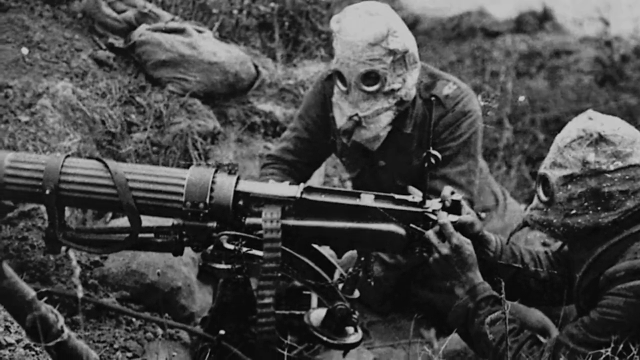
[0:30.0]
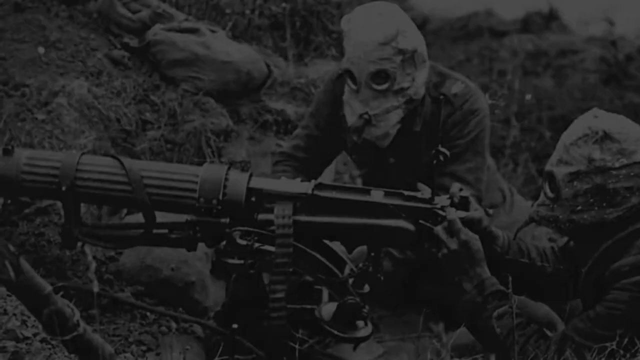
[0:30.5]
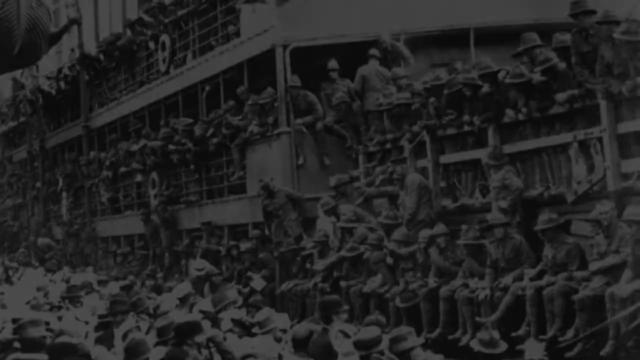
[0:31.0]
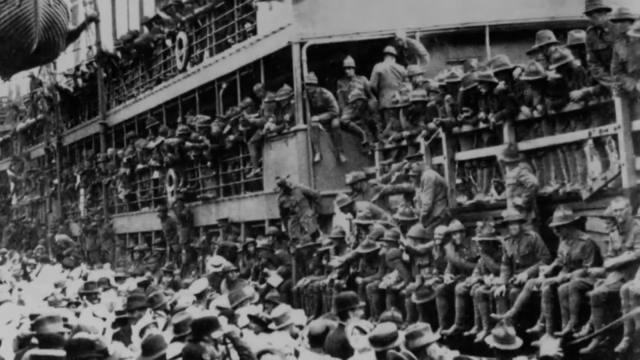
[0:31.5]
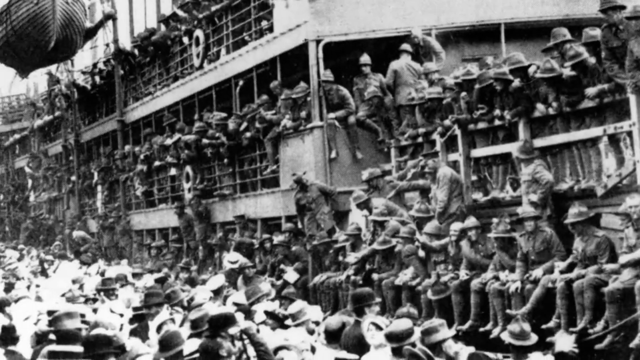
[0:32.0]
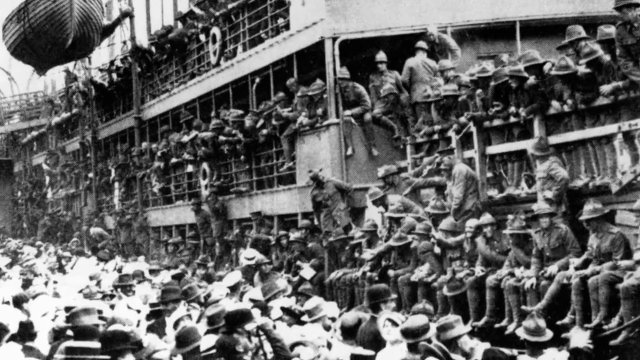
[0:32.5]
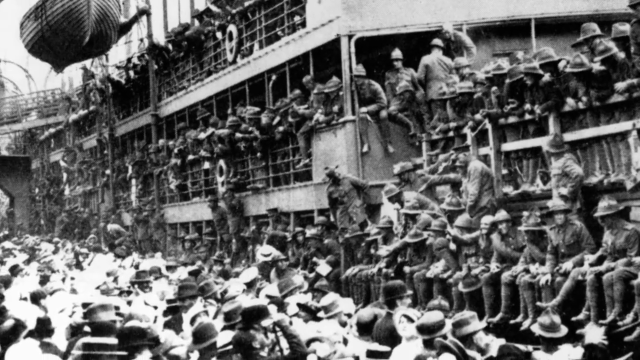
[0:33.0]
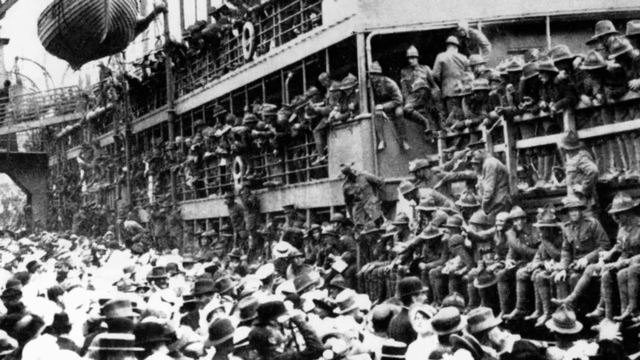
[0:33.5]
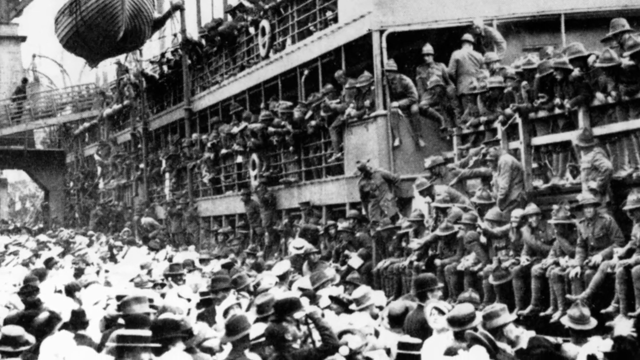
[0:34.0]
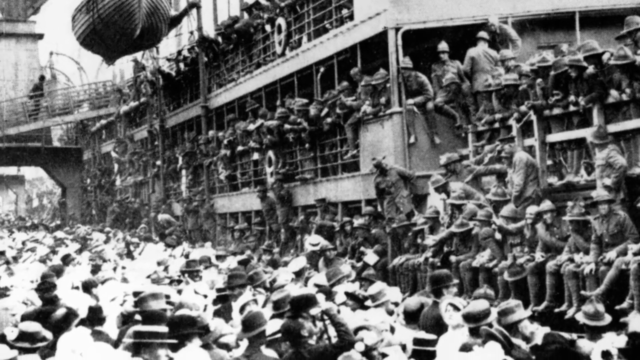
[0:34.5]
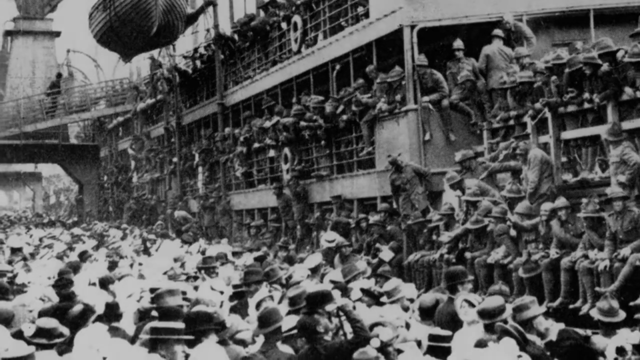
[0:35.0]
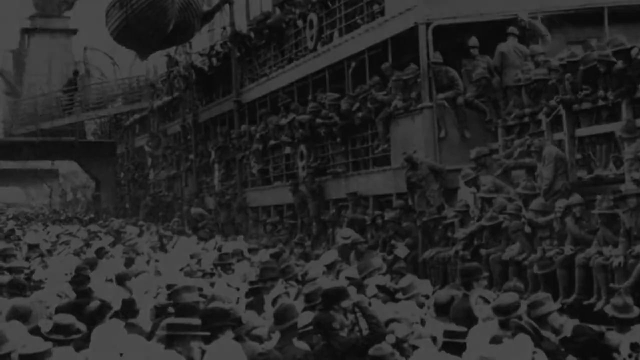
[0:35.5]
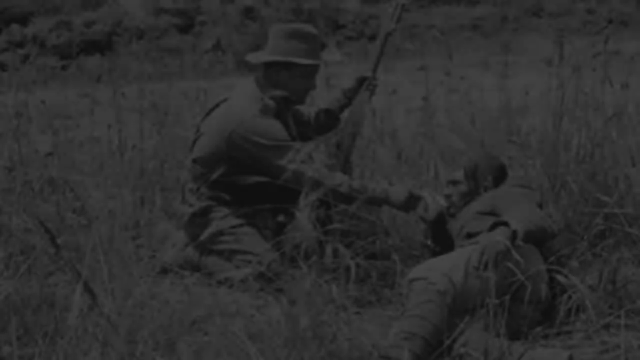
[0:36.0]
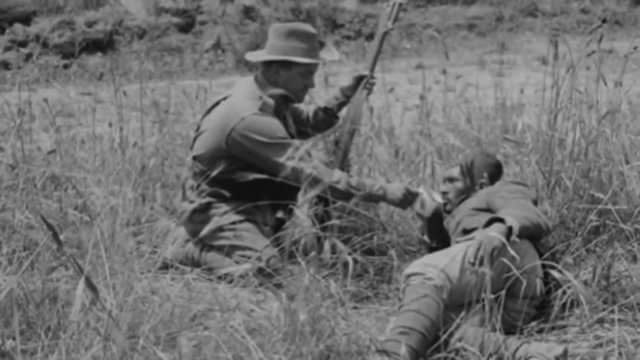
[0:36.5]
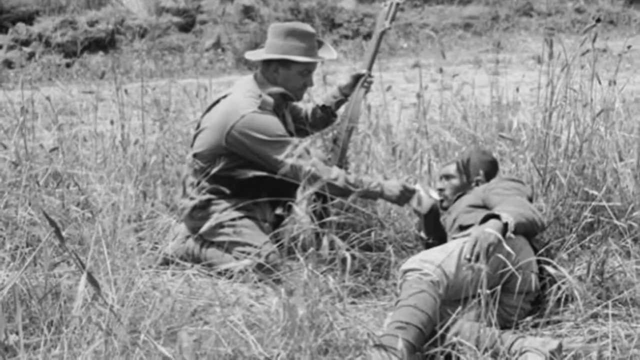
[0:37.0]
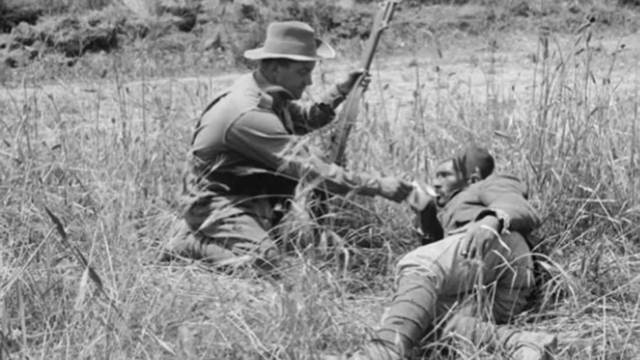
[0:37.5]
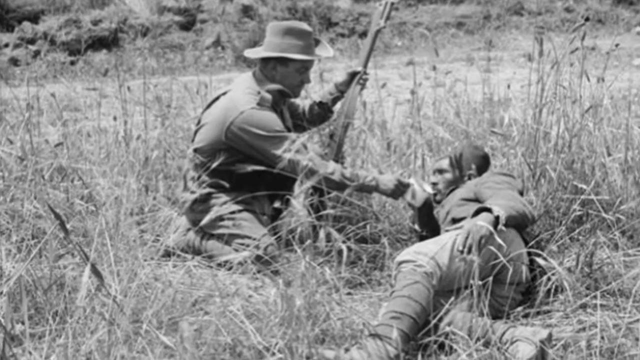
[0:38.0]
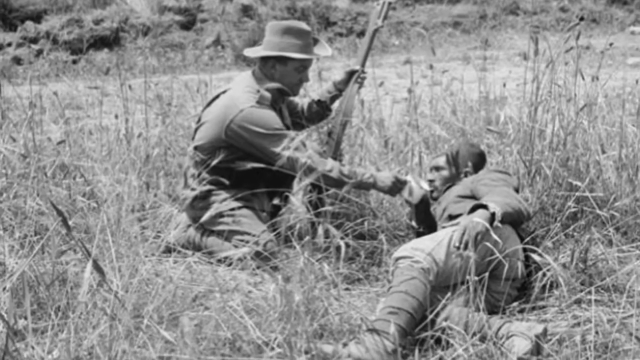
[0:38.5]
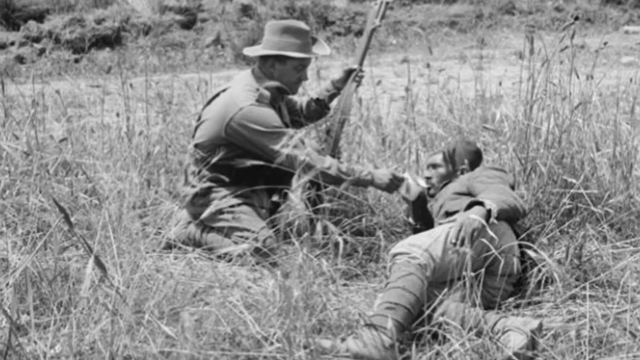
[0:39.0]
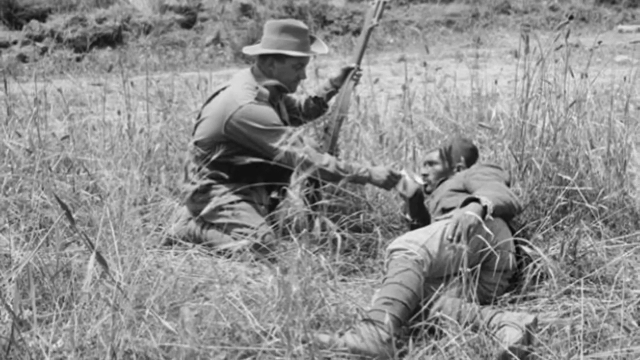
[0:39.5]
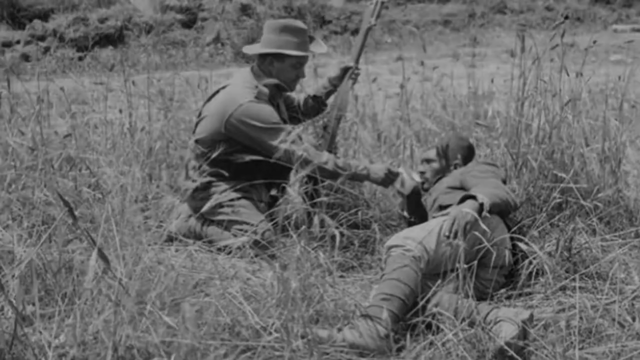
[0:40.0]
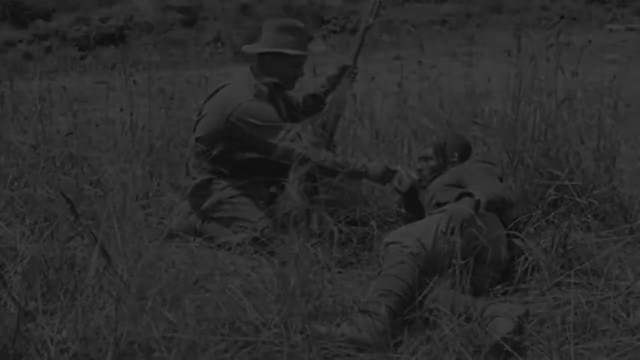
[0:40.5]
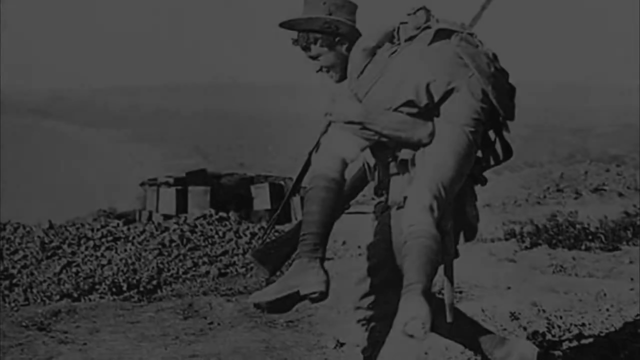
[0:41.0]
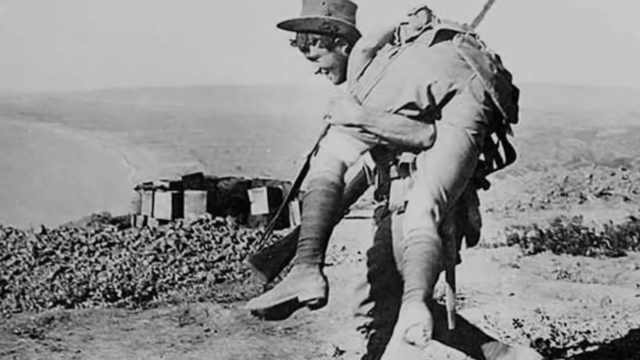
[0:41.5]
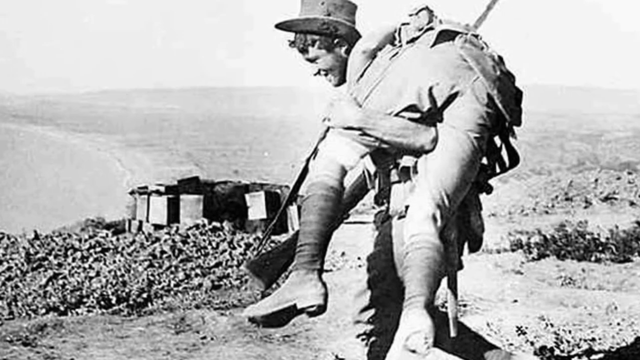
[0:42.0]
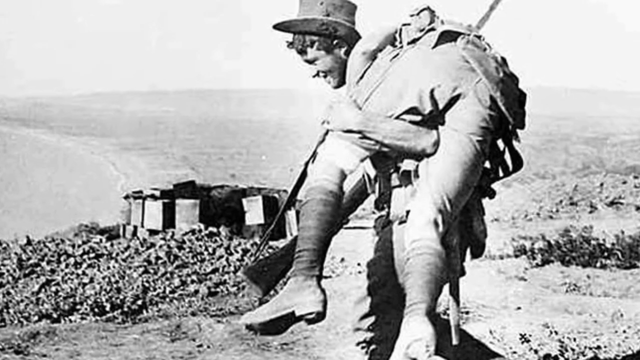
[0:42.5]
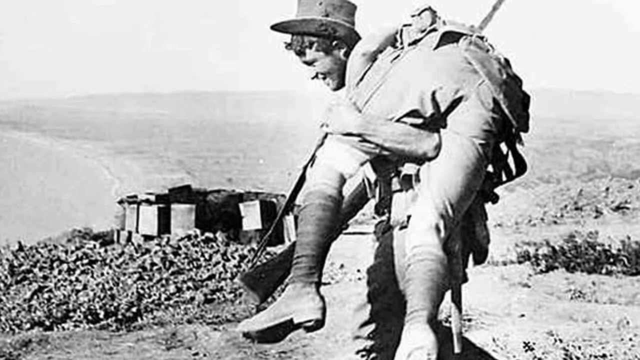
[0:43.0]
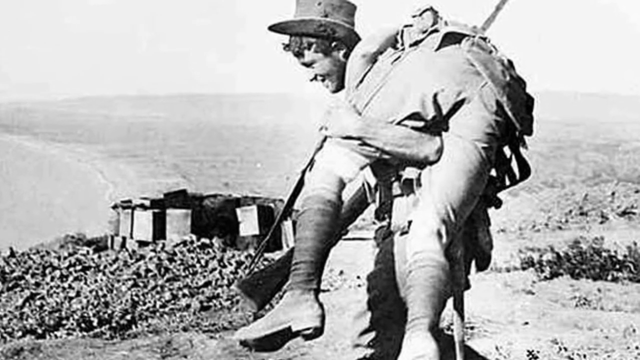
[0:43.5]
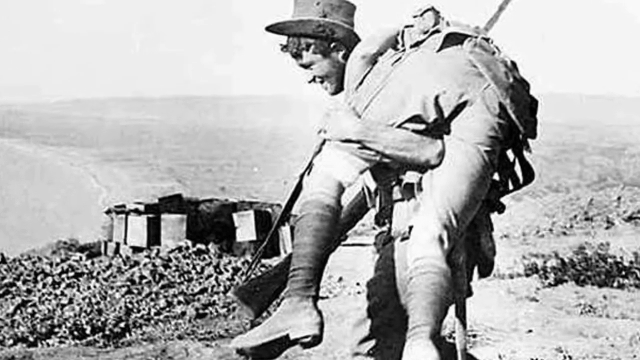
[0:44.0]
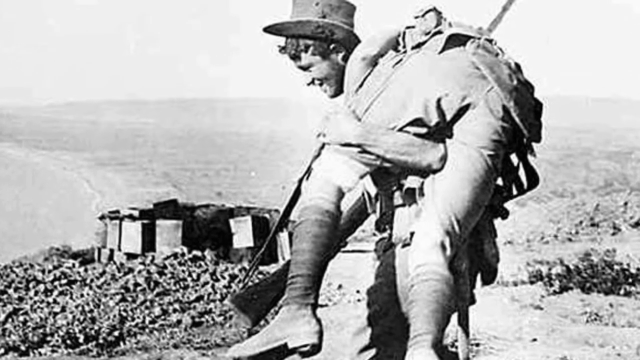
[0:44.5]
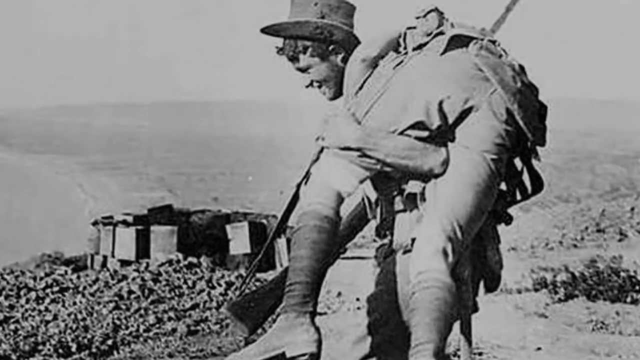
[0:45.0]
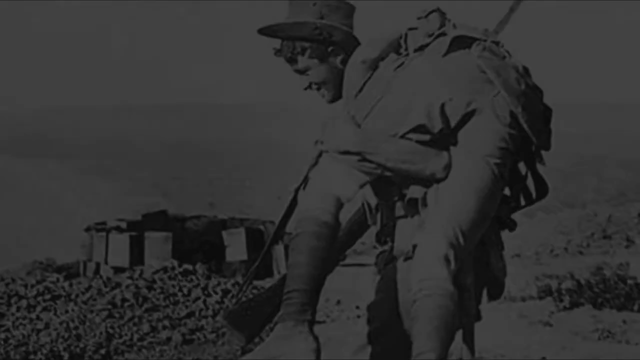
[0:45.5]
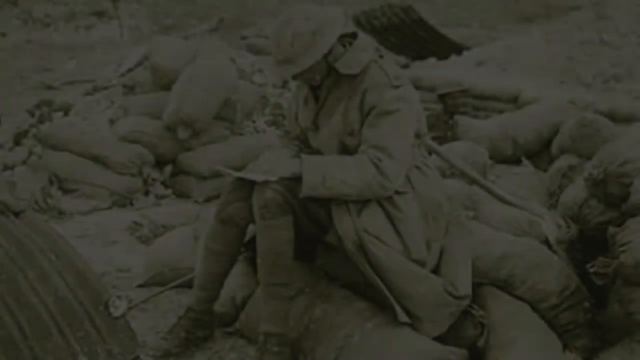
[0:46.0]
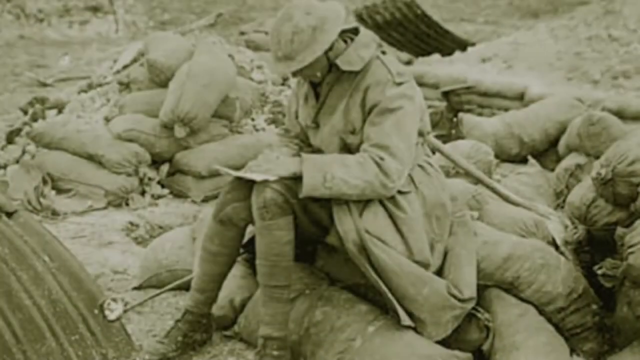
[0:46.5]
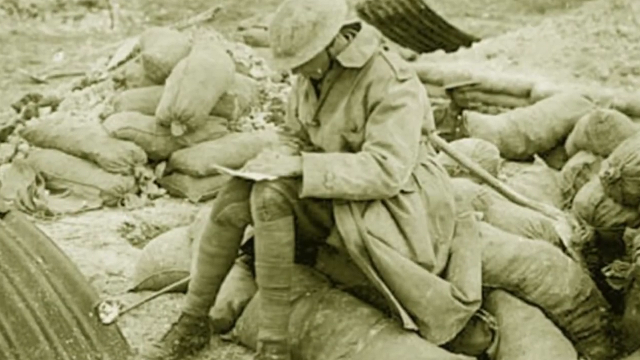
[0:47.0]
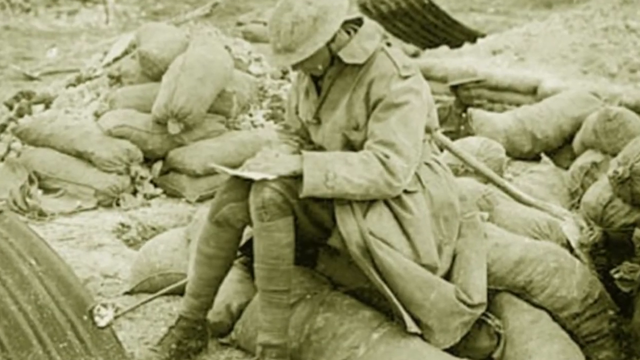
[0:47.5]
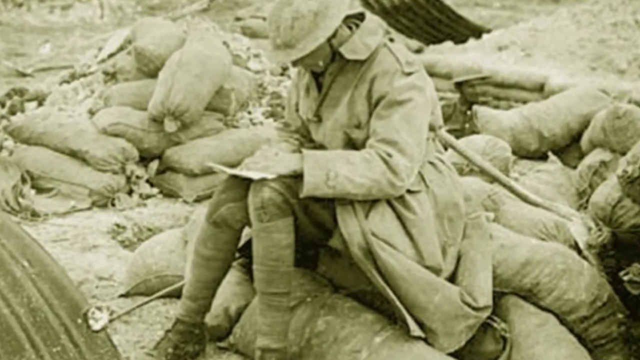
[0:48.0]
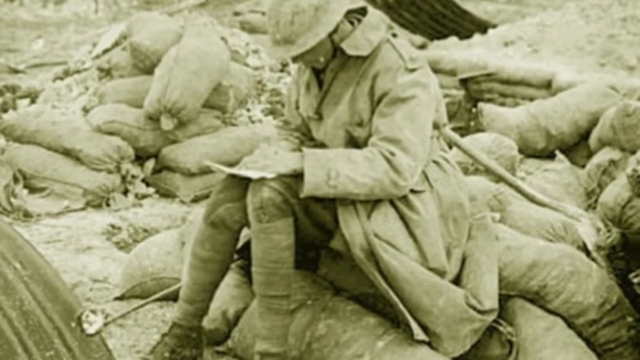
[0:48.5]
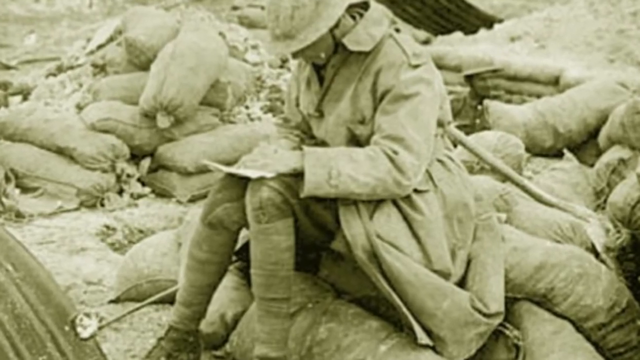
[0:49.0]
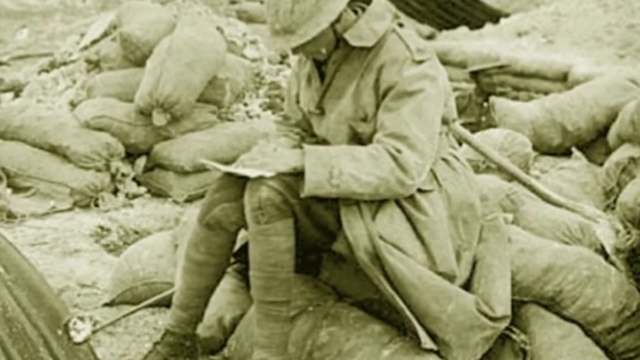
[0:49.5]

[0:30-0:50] Imagery shows two men during World War Two wearing gas masks. The masks are crude and look homemade, with circular eye openings, and look more like bags over their heads. The men are operating a turret-style gun. The view pans to black and white imagery of sailors on a multi-tiered ship with at least three floors. People next to the ship are well-wishers, either seeing the ship off or seeing it come into harbor. A catwalk goes to the ship from the side of the walkway. Next is an image of two soldiers in tall grass. One lies on his right side; he looks dark-skinned and has a head wrapping. The man to his left faces him with his right arm outstretched and appears to be handing him a cup to drink from, holding it to the man's mouth. This man looks Caucasian, wears a large-brimmed hat, and holds a gun with a bayonet in his left hand, pointed upward. The view then pans to a Caucasian male carrying another man in military uniform. He faces to the left and wears a hat. His left arm is wrapped around the other man's left thigh, and he has the man thrown up over his shoulders.